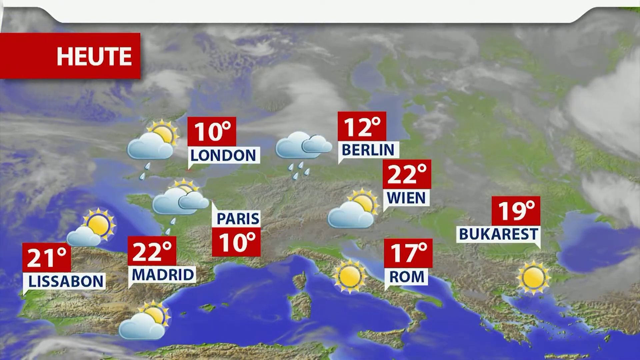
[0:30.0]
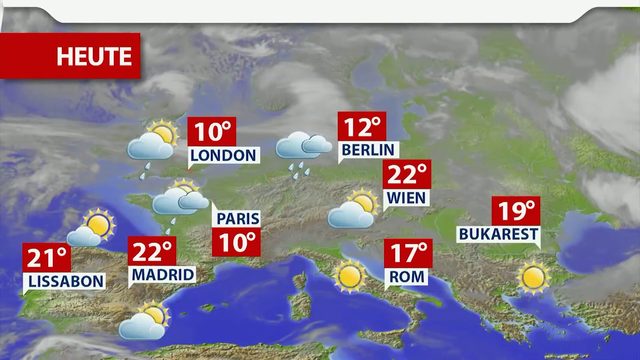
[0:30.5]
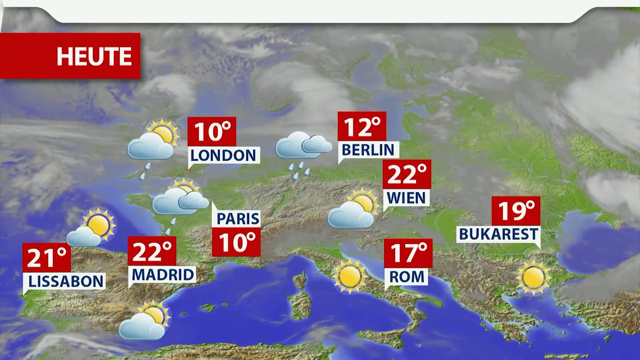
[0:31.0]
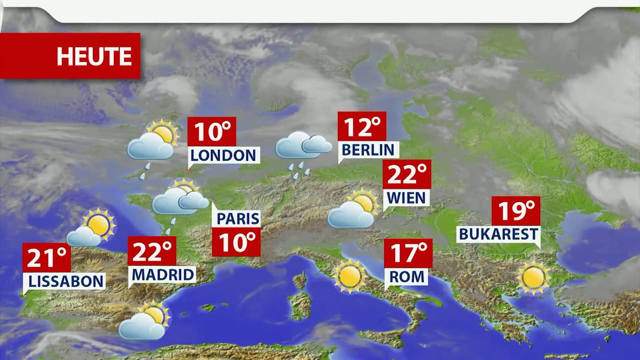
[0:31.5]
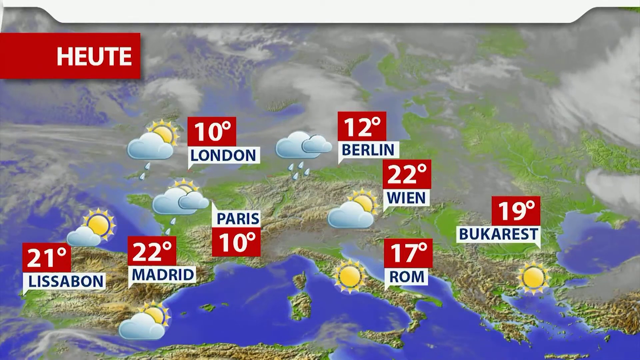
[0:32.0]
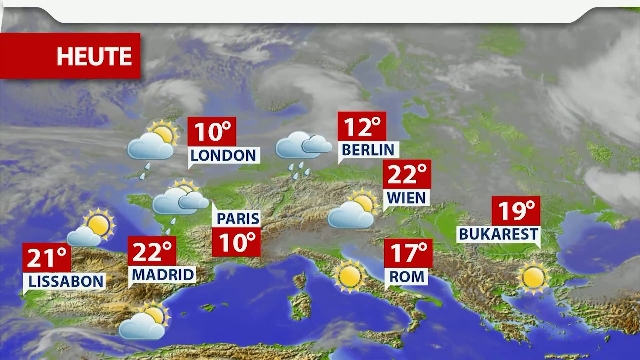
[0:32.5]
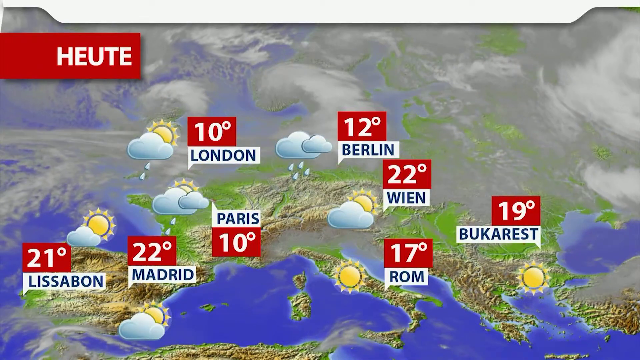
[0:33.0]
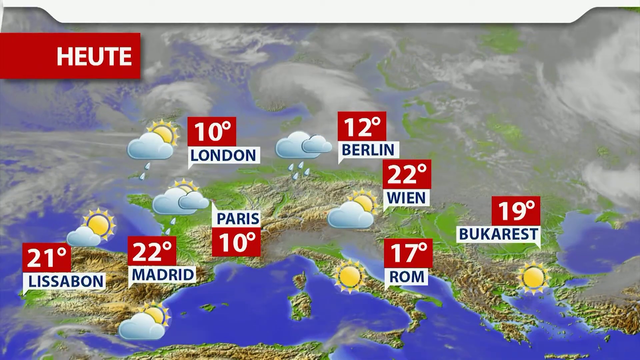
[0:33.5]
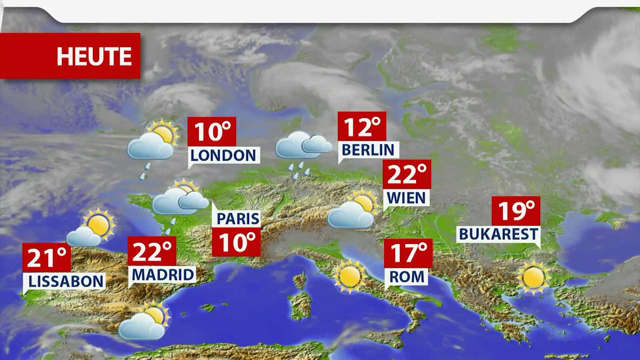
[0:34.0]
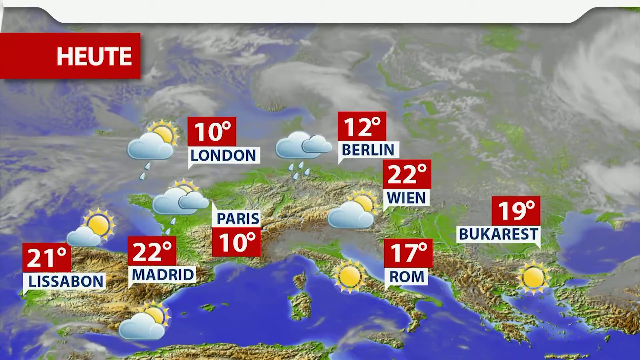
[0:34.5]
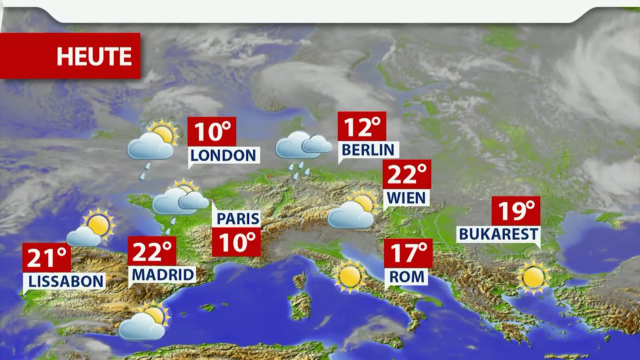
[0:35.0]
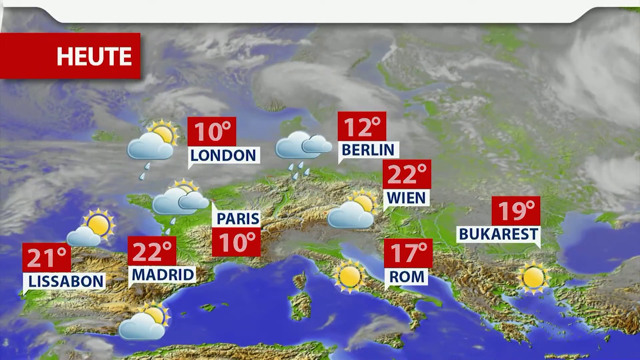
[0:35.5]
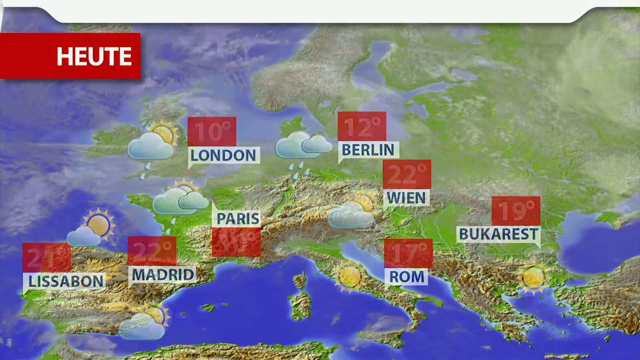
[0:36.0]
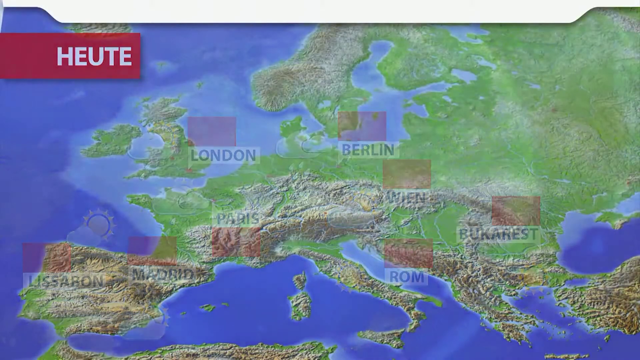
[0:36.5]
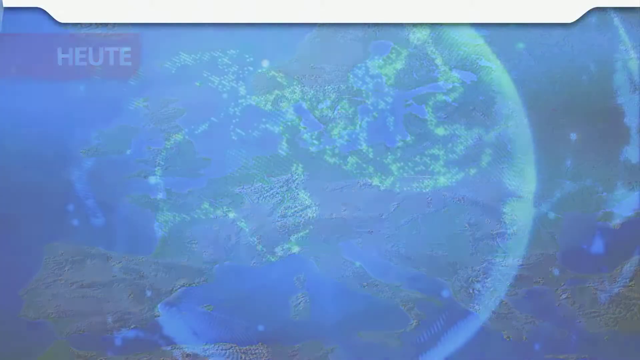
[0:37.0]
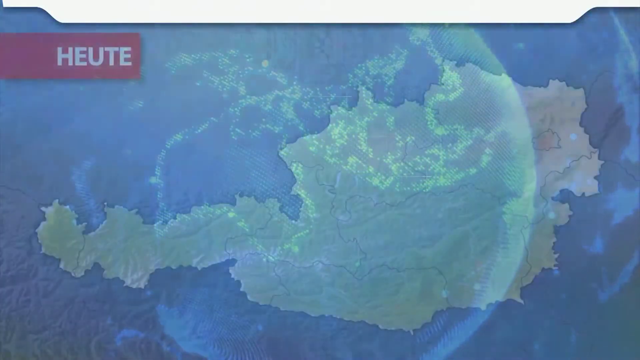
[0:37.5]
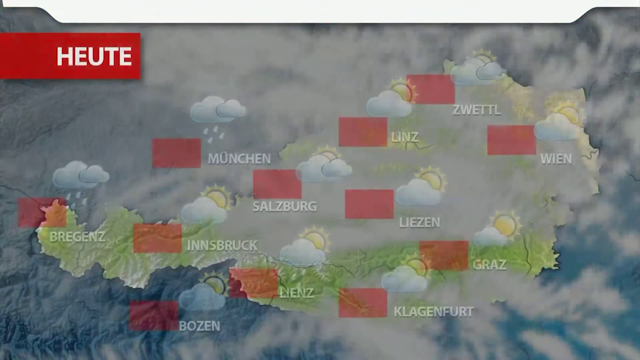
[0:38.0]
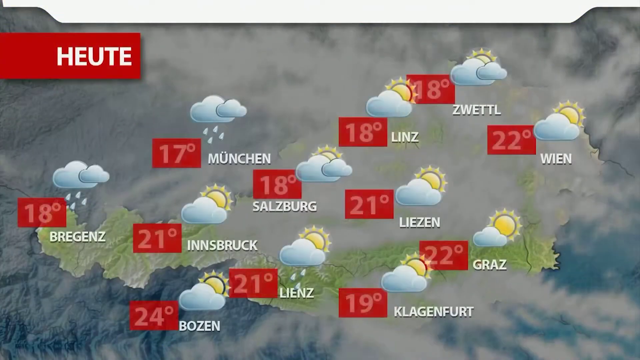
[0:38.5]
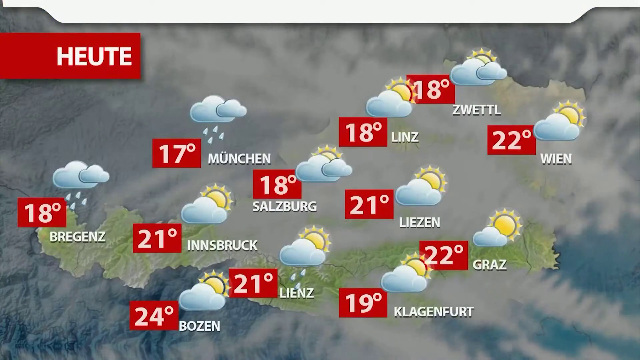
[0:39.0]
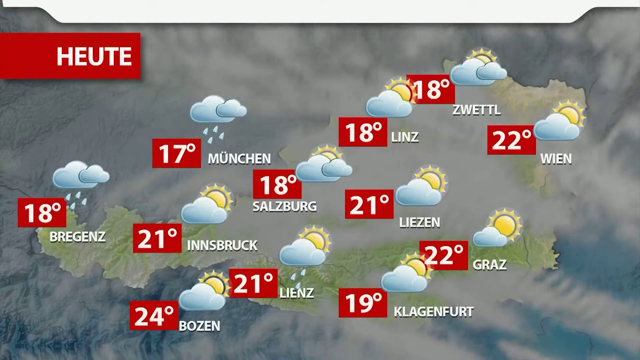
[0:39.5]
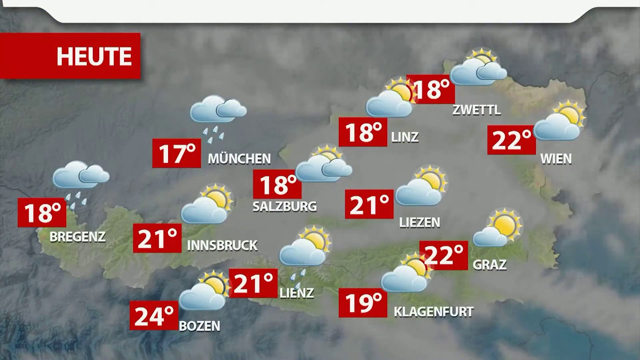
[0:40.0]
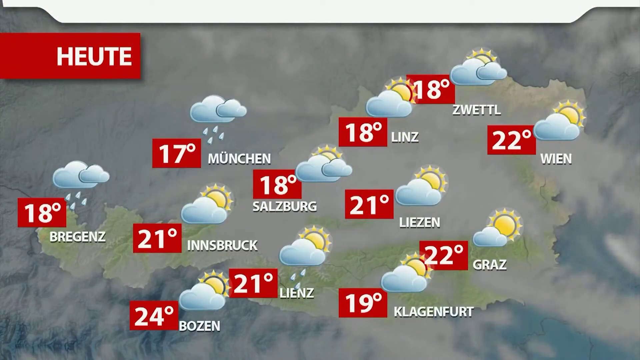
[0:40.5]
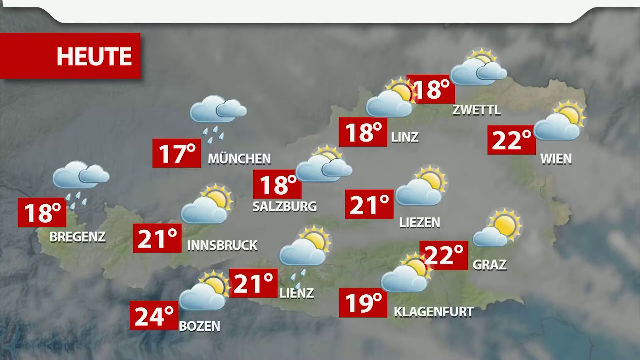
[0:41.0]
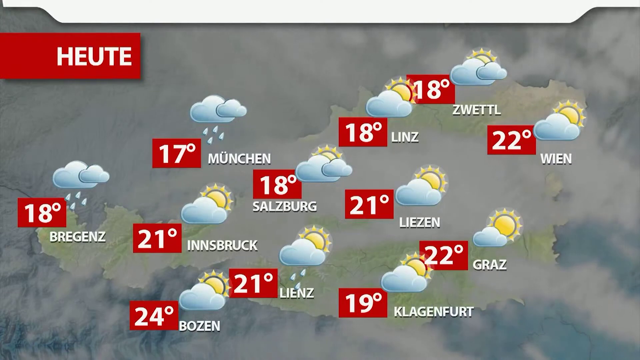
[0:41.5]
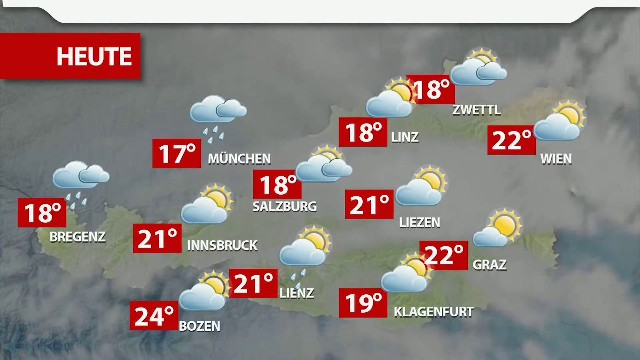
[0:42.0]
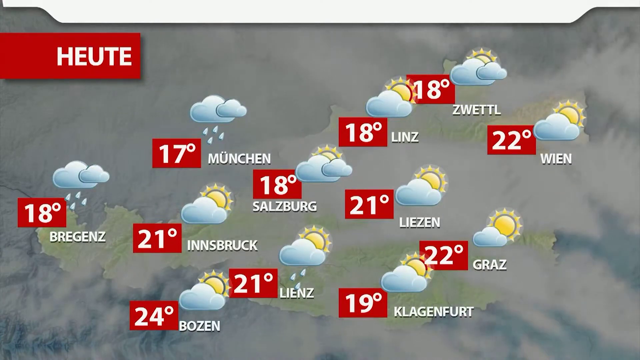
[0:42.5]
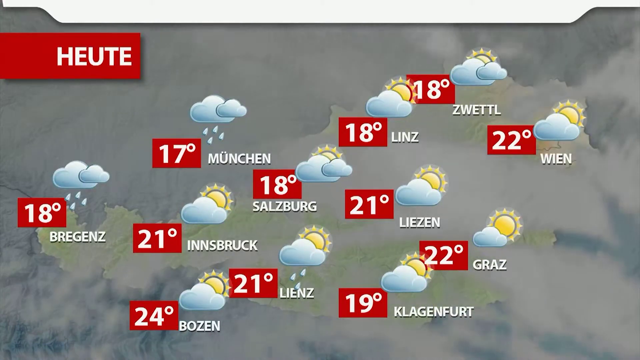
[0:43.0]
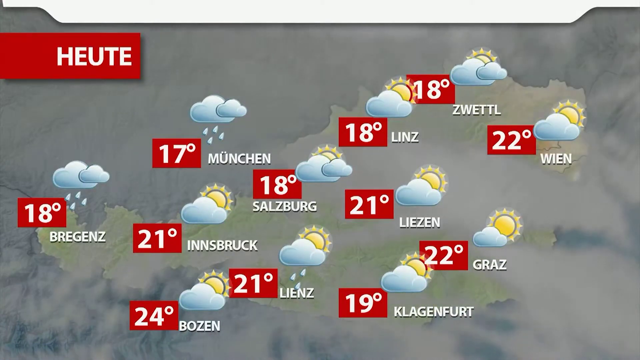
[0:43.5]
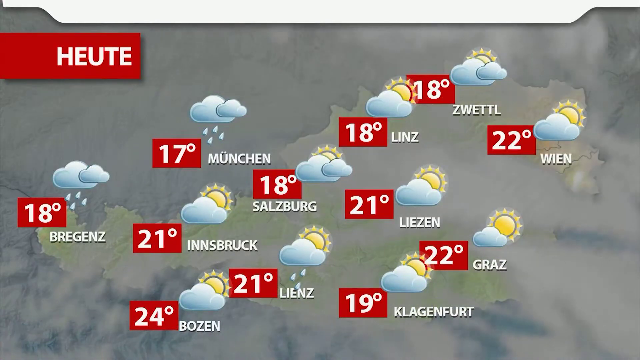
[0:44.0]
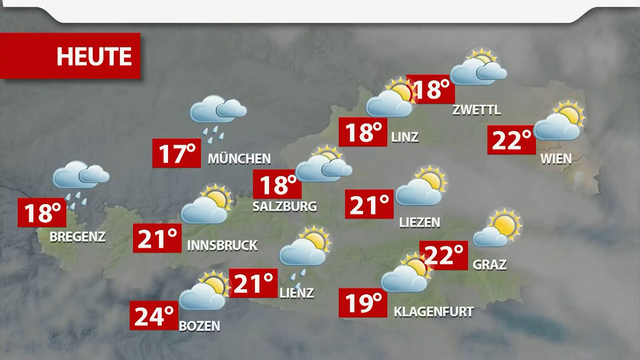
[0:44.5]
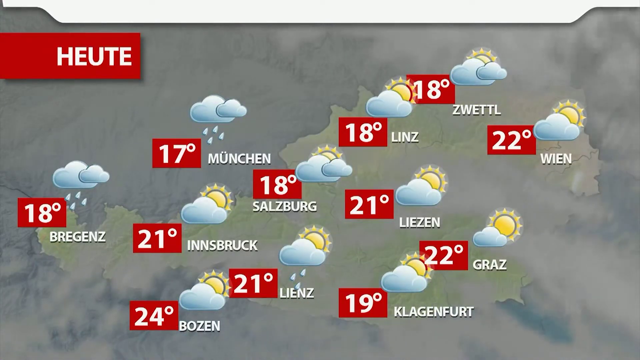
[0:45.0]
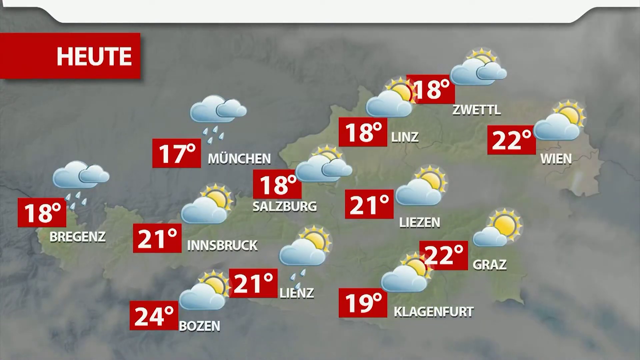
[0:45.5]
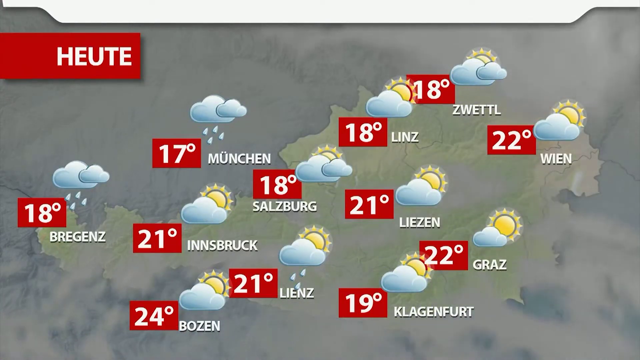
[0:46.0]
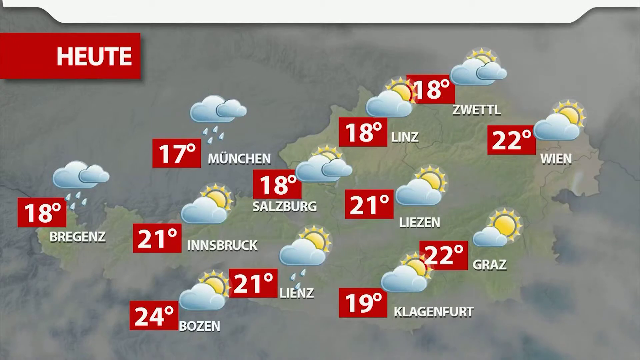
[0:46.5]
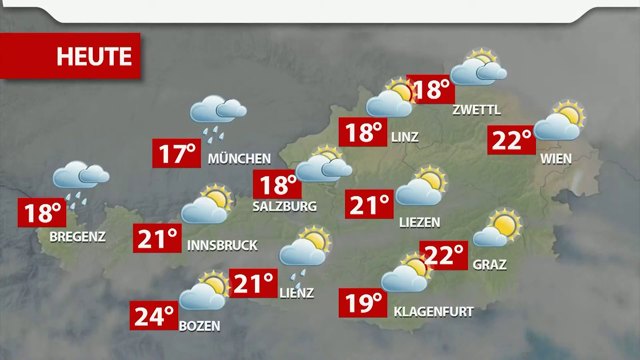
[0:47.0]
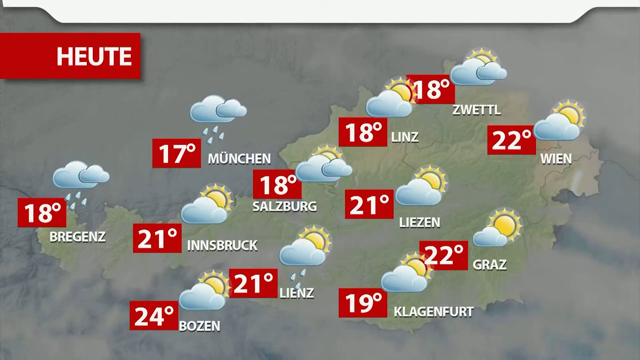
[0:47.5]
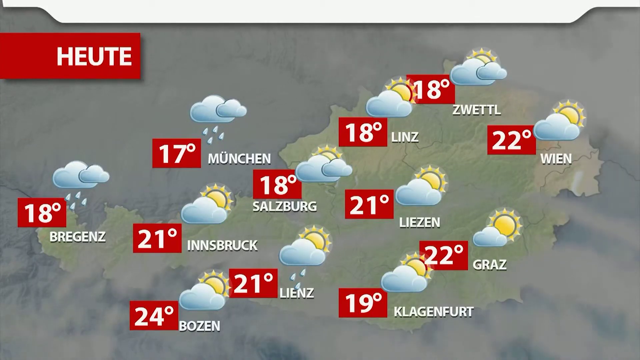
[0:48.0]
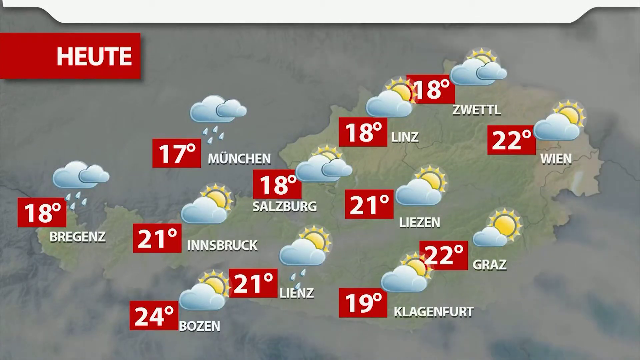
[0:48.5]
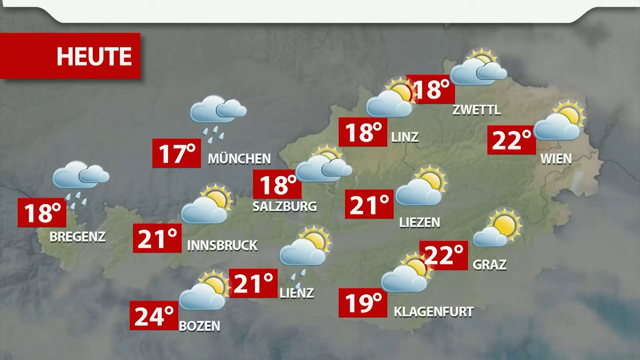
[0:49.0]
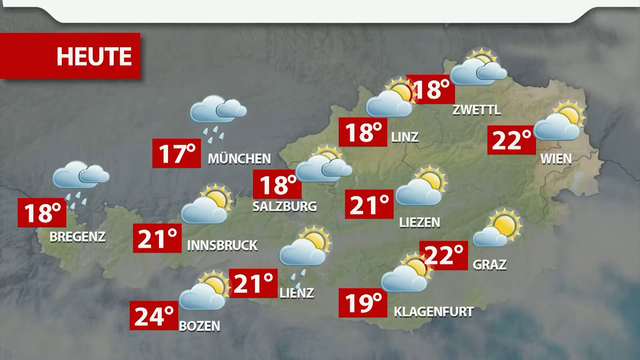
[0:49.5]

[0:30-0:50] The weather map continues, with icons of clouds with some sun, a few clouds with rain, and some with only cloud and rain. Numbers in degrees Celsius appear in red squares, written in white. In the background a white cloud keeps moving.